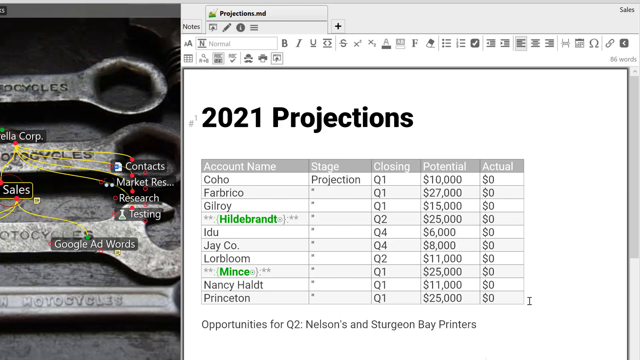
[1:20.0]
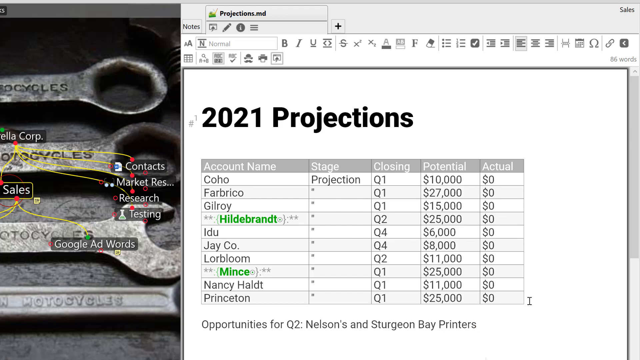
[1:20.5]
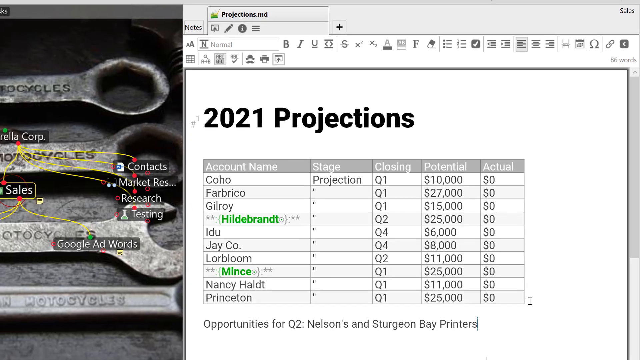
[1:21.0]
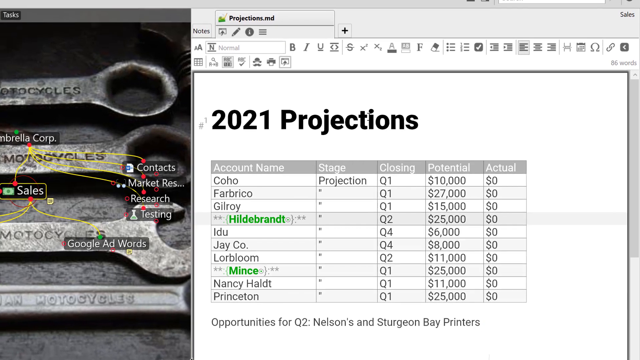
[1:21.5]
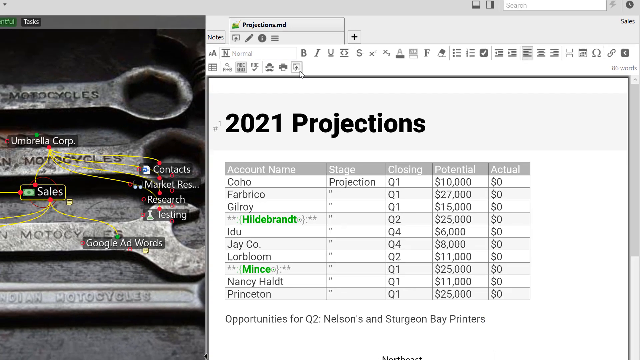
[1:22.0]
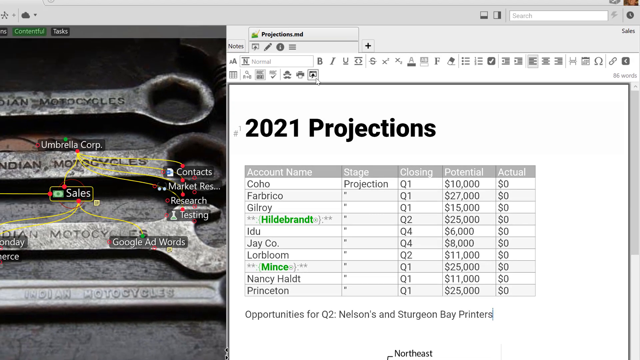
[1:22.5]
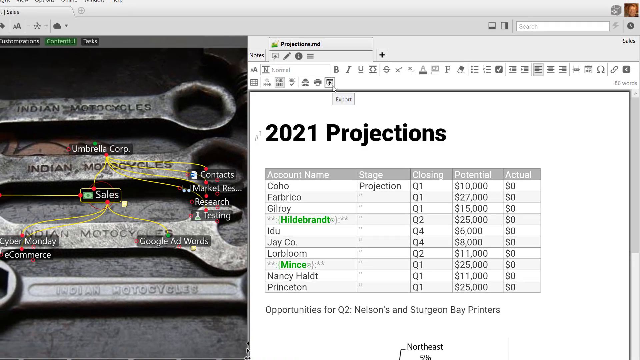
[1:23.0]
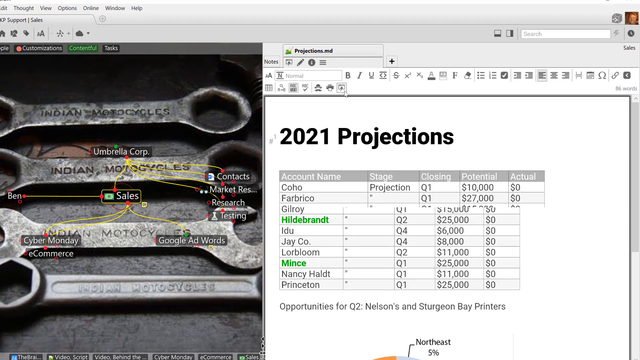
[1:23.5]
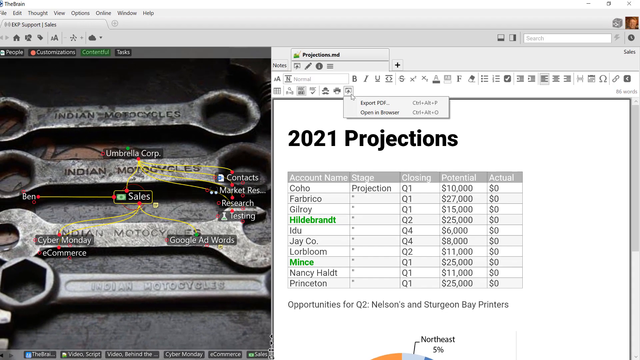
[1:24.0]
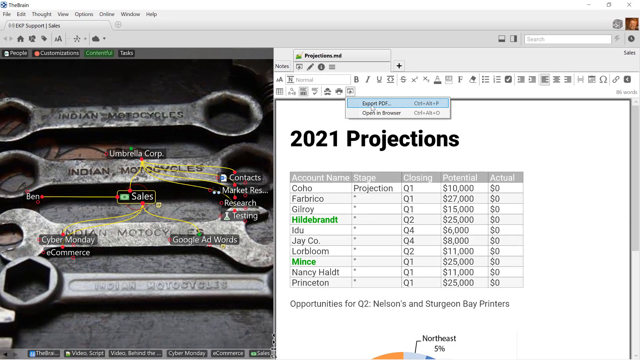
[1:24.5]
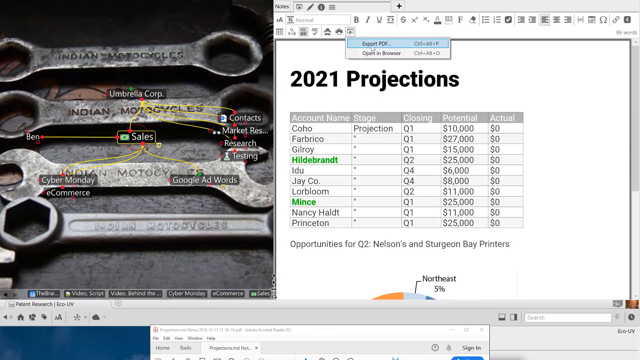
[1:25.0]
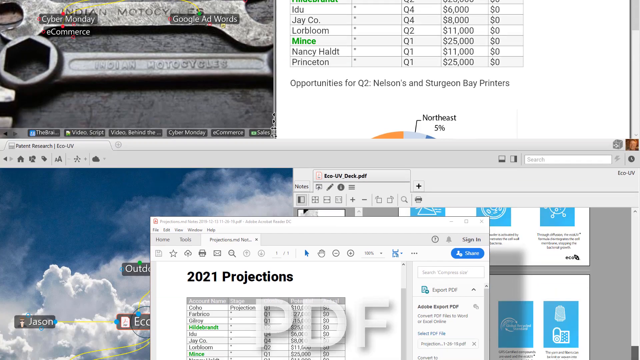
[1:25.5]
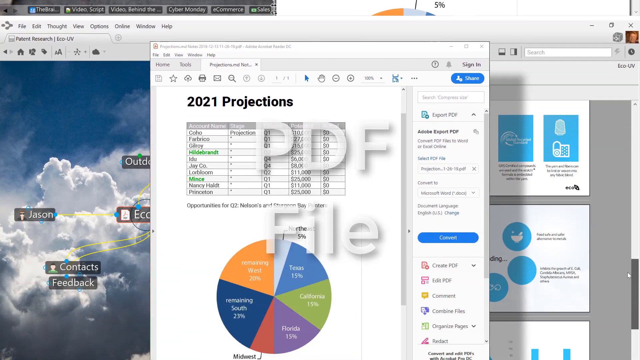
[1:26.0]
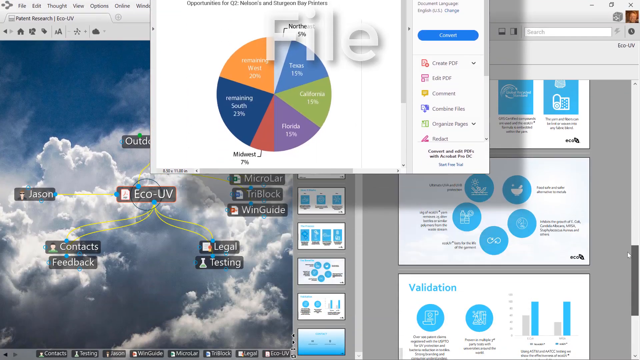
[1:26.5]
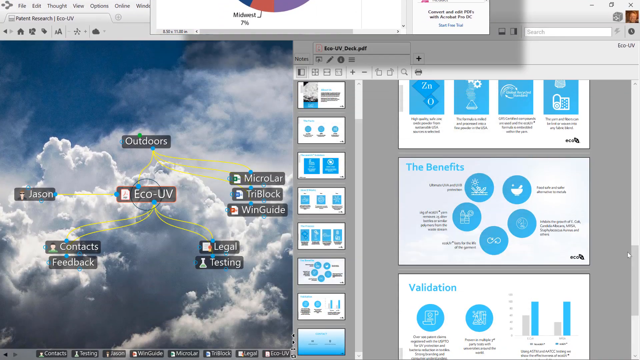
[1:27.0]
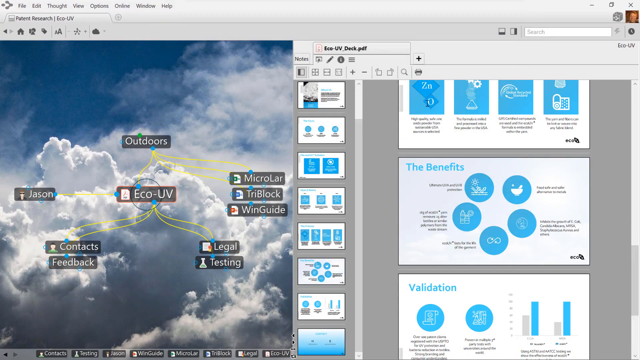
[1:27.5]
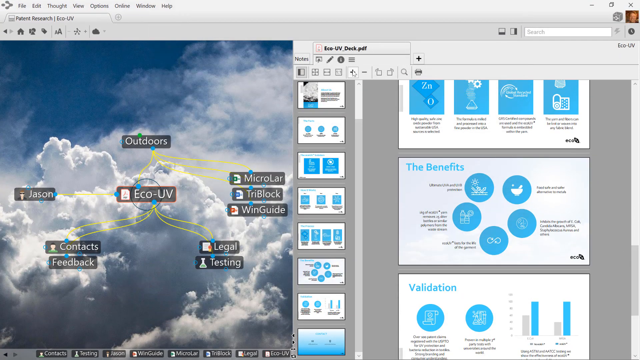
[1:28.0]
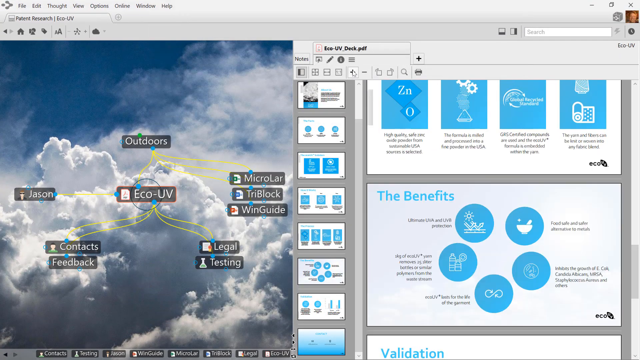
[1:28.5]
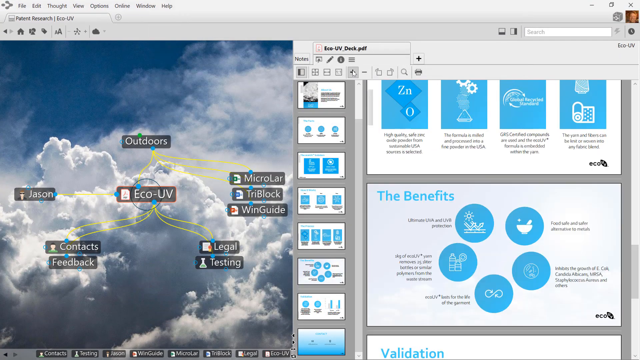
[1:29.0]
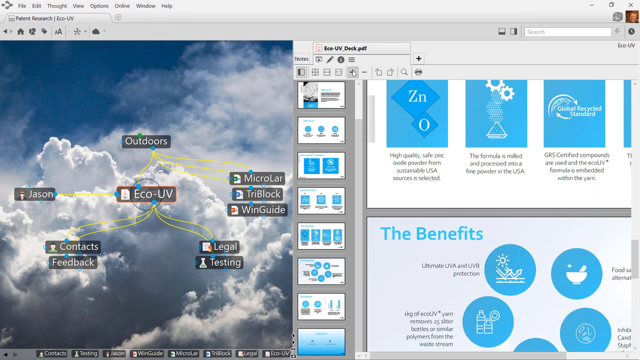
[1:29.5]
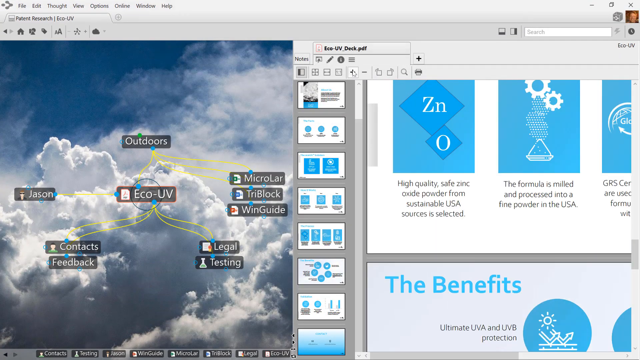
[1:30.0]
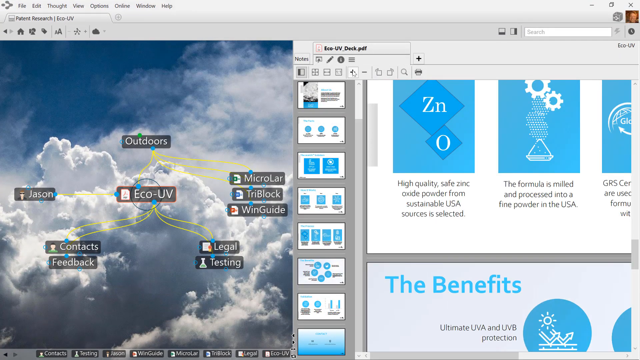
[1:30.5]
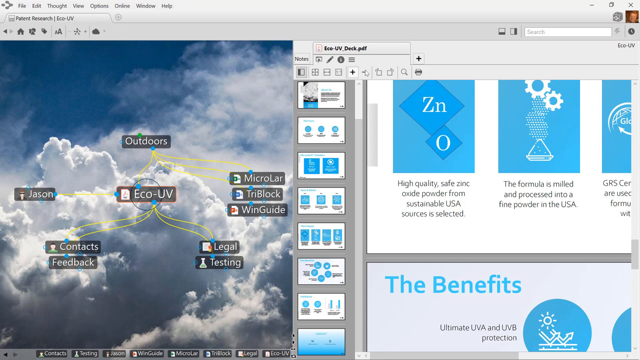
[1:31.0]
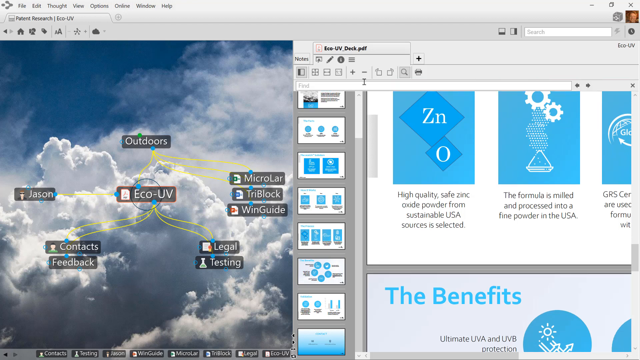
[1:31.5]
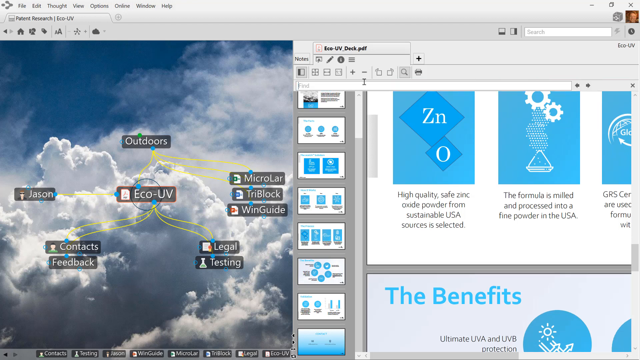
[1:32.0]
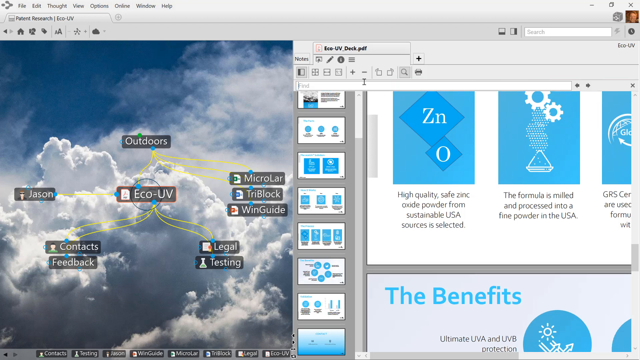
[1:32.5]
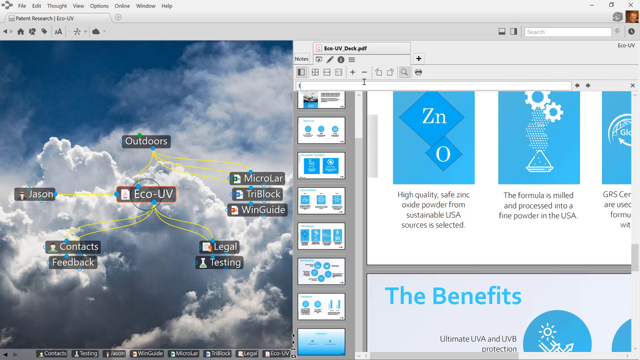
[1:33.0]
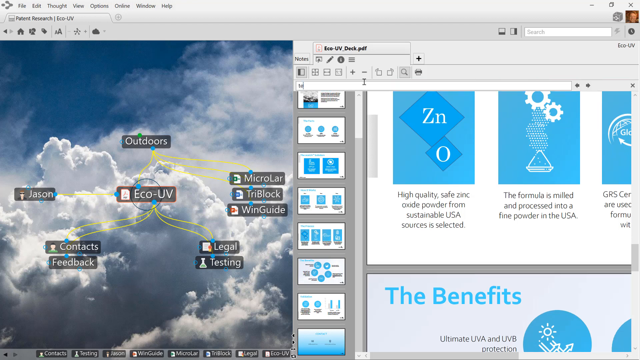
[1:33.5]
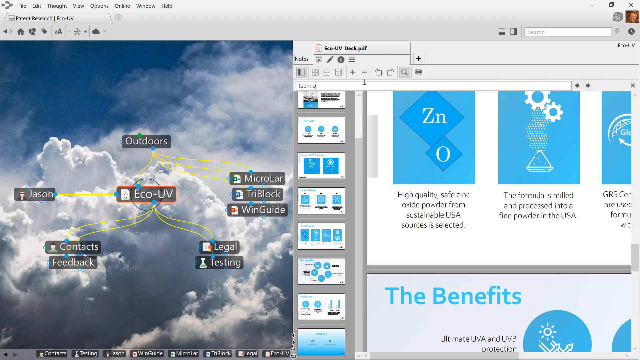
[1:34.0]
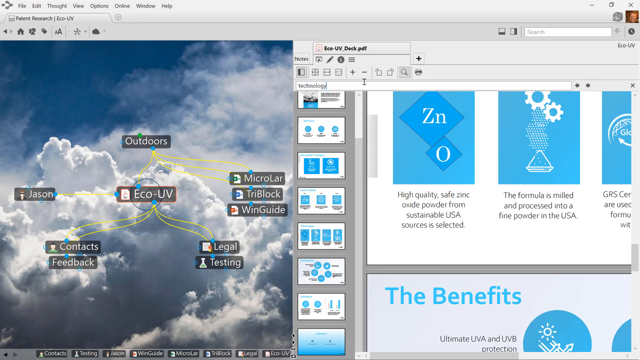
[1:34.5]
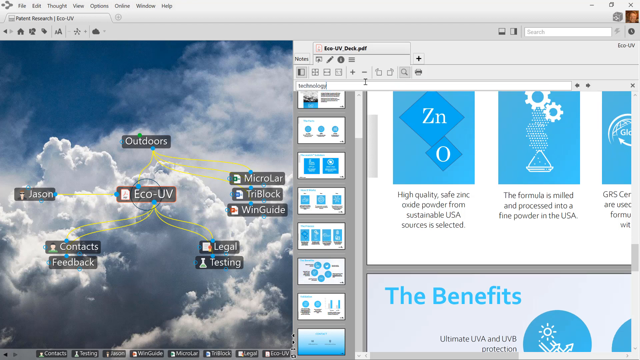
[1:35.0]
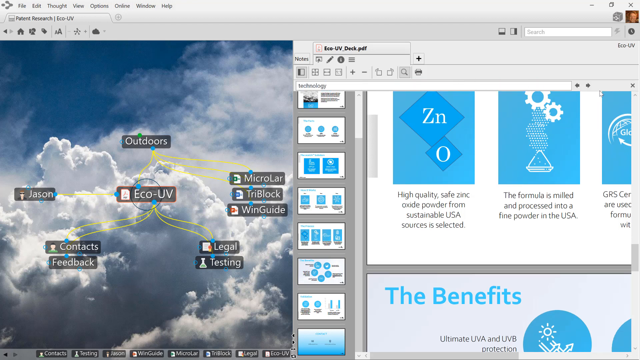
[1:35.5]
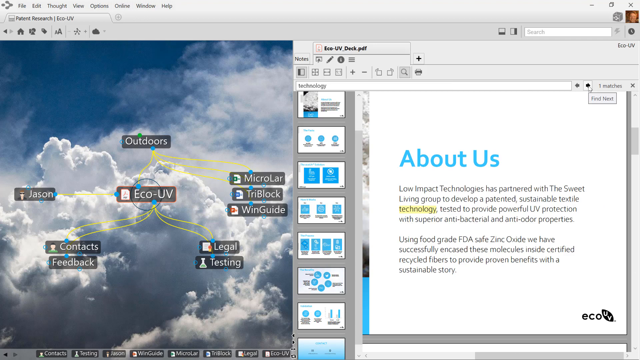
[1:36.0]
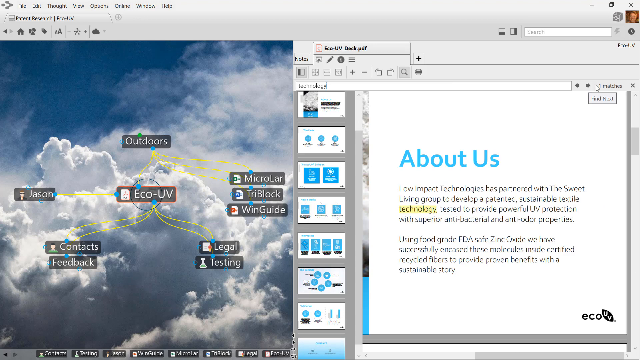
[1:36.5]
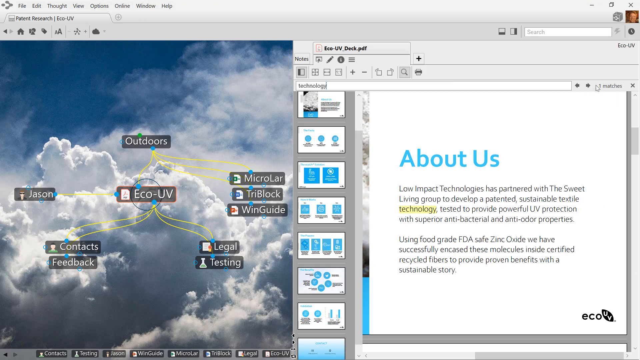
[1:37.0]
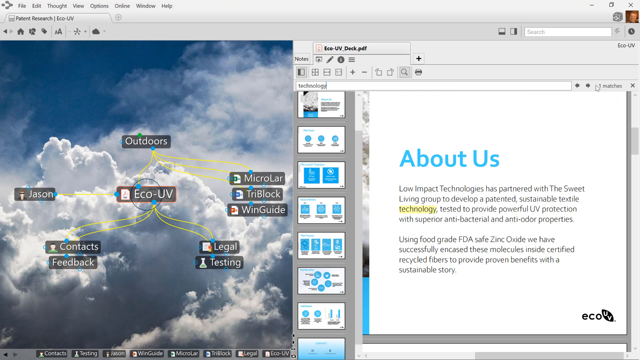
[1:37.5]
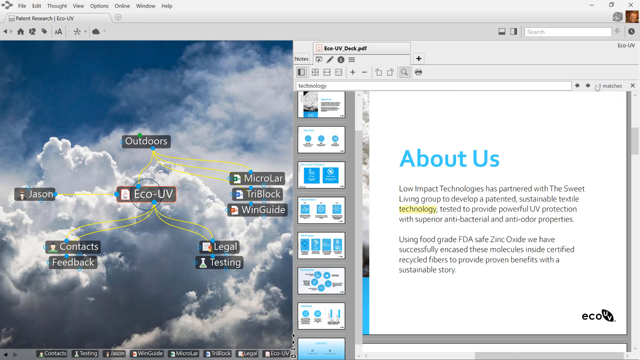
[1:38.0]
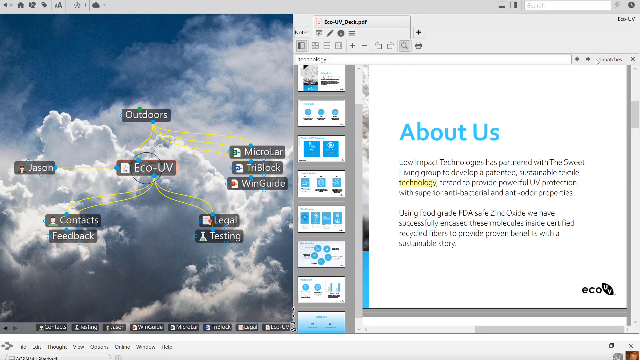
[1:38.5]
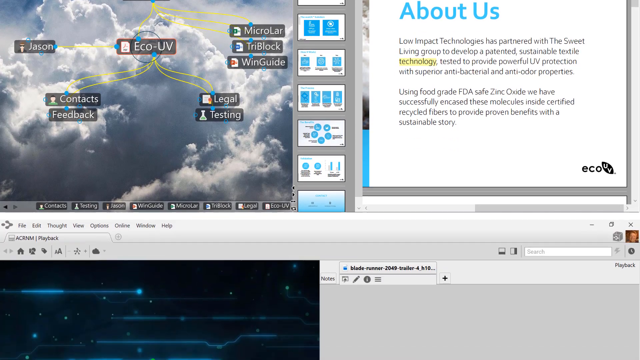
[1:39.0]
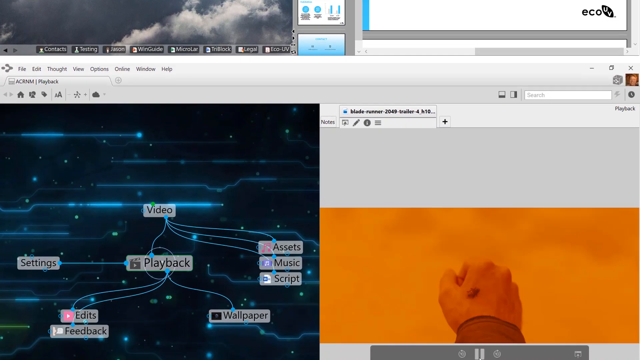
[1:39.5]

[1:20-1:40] On "2021 projections", the view zooms out a little and the user clicks on "export", which offers "export pdf" and "open in browser" options; they highlight an option without clicking it. They scroll down past the wrenches and the projection table, and a PDF file appears with assorted color sections of a pie chart that is hard to make out. On the left is a cloud-like formation with more boxes and yellow lines, starting with "outdoors" and branching into a few others. On the right side is a PDF with a few different slides: one is cut off and has four blue images, and another is about benefits. The view starts to zoom in with the mouse pointer, and the user clicks some of the options at the top, such as search, then clicks the right arrow to go to the next slide, "about us", and scrolls down further. Before it gets cut off, there appears an animated, cartoon-looking orange fist with what looks like a long sleeve, almost rising up. At the top of the projections is something like a file folder, and, like a Word document, there are options to change the font style, bold, size and bullet points.